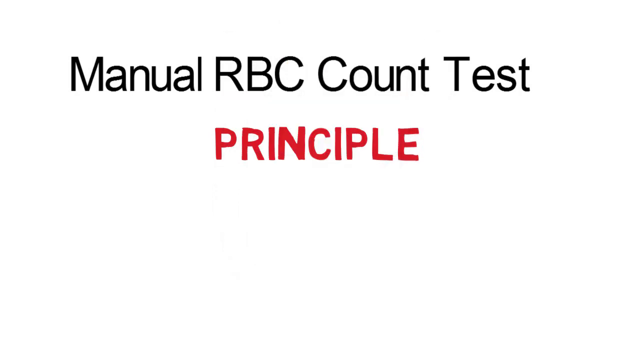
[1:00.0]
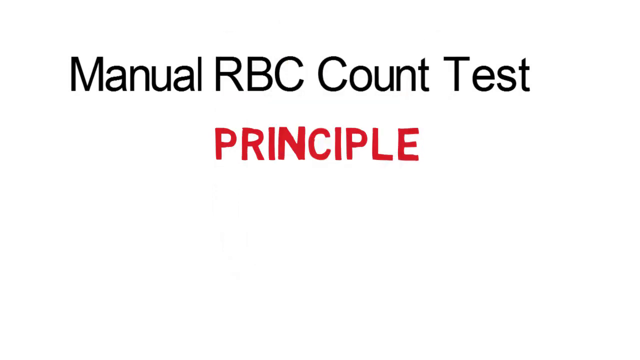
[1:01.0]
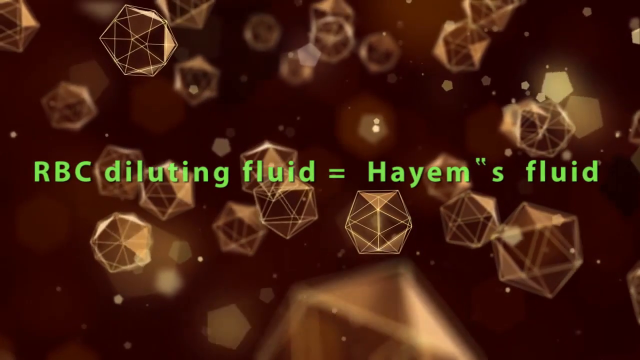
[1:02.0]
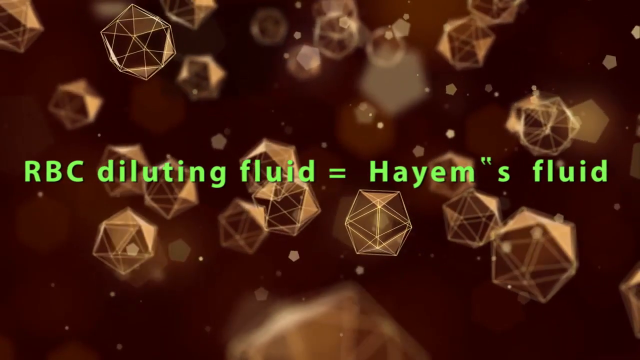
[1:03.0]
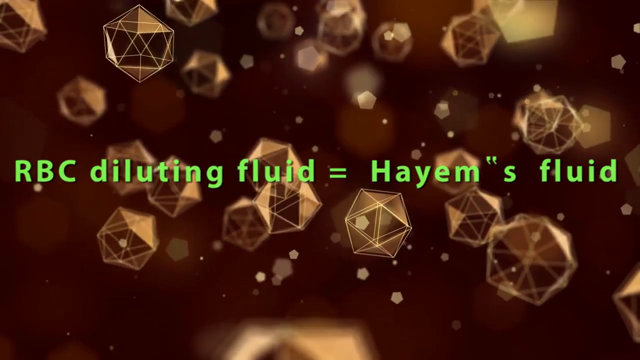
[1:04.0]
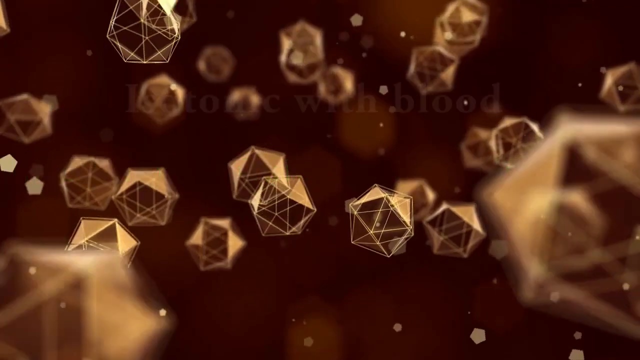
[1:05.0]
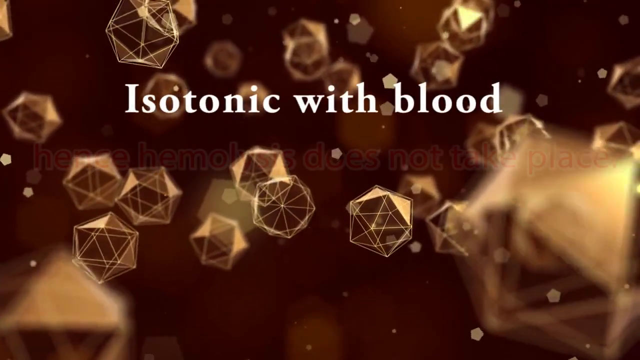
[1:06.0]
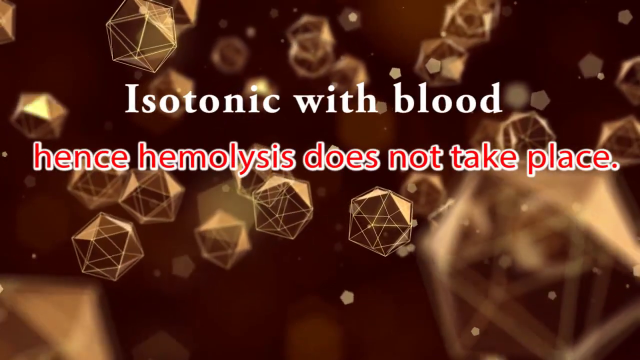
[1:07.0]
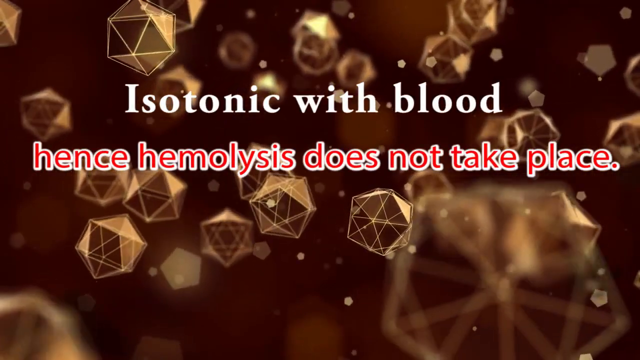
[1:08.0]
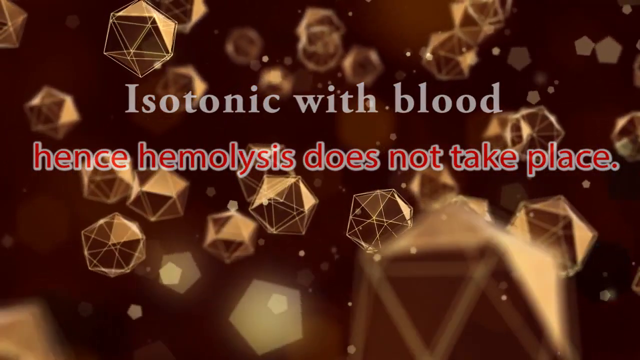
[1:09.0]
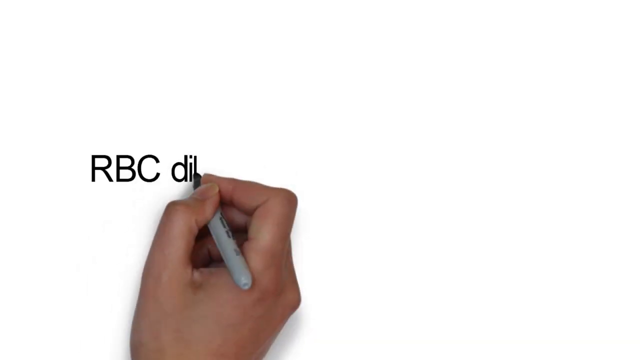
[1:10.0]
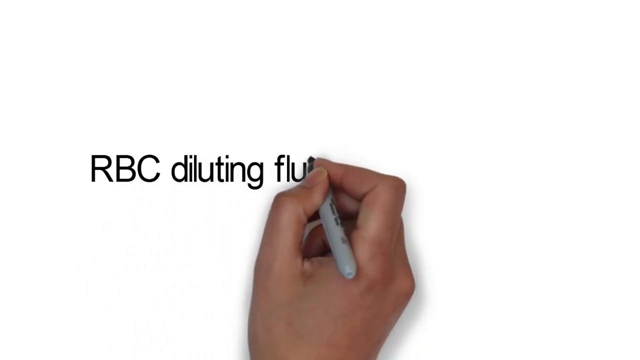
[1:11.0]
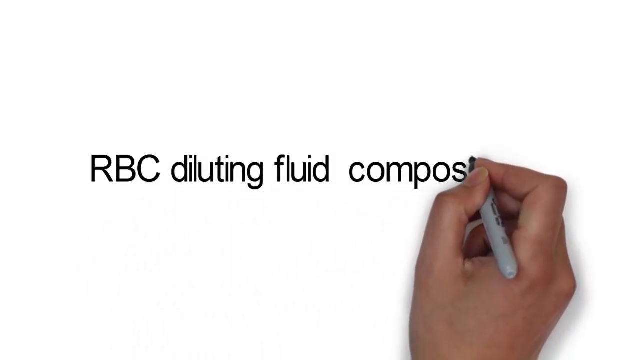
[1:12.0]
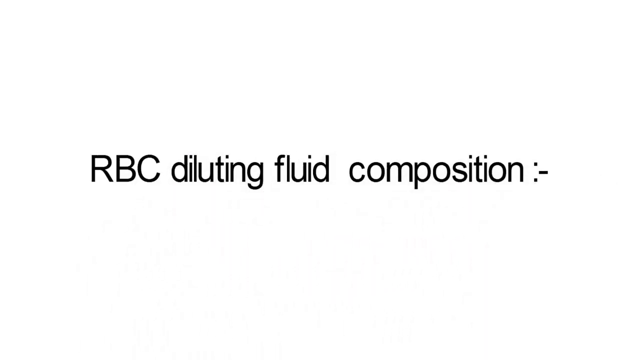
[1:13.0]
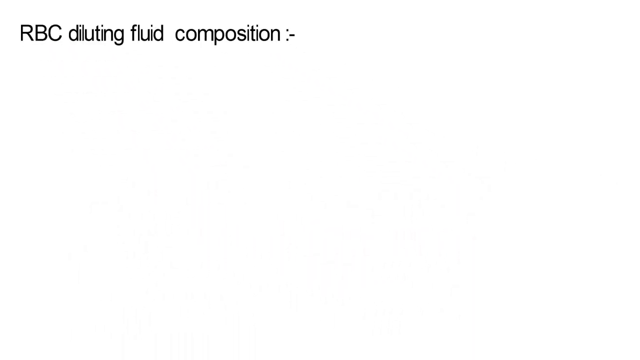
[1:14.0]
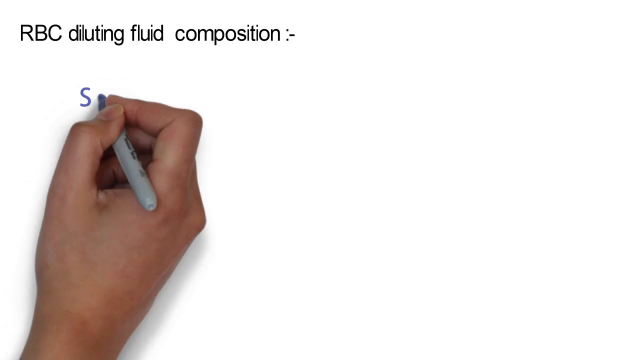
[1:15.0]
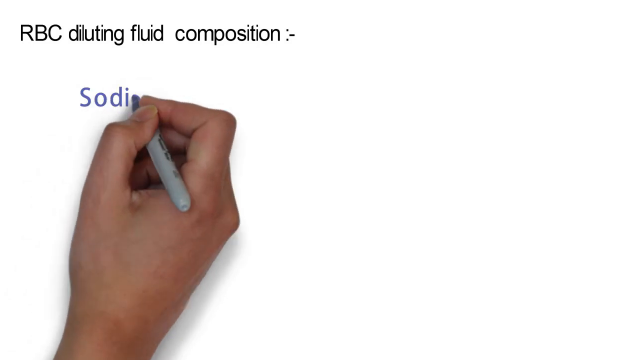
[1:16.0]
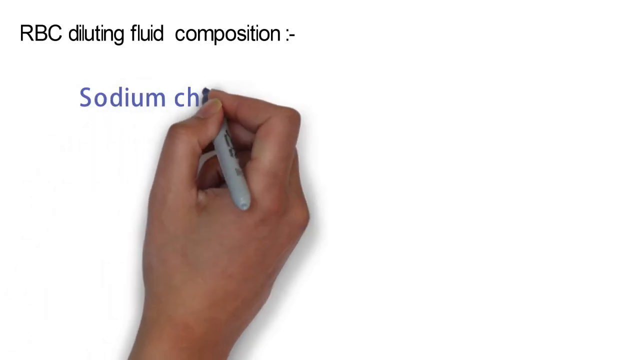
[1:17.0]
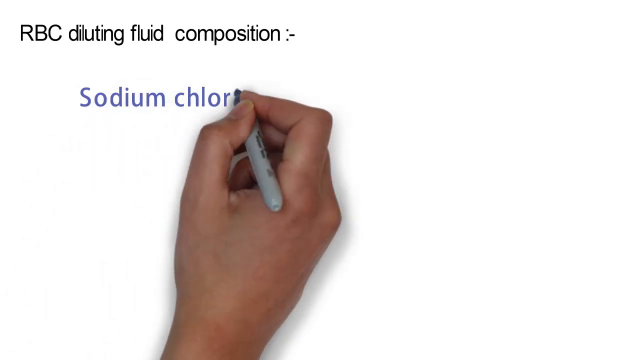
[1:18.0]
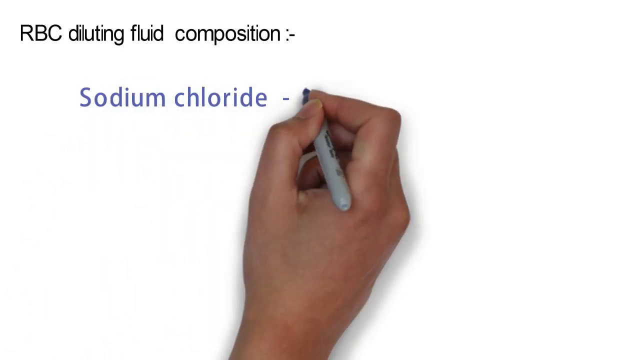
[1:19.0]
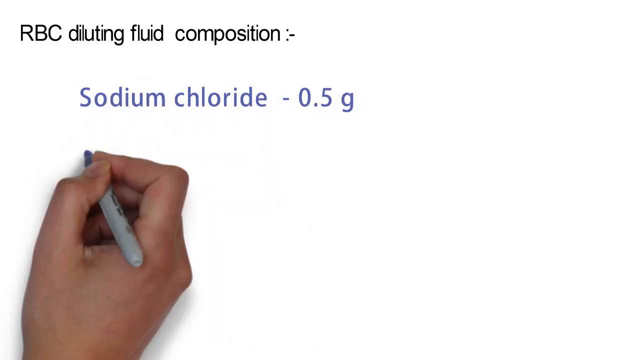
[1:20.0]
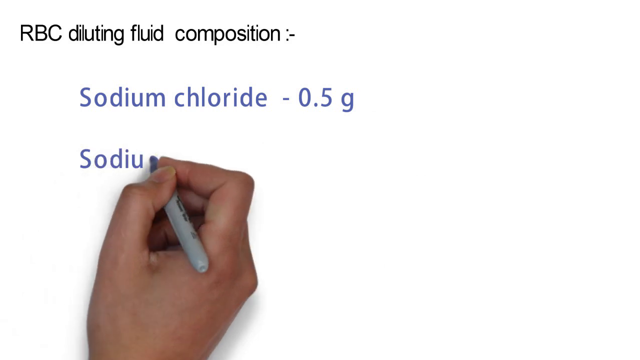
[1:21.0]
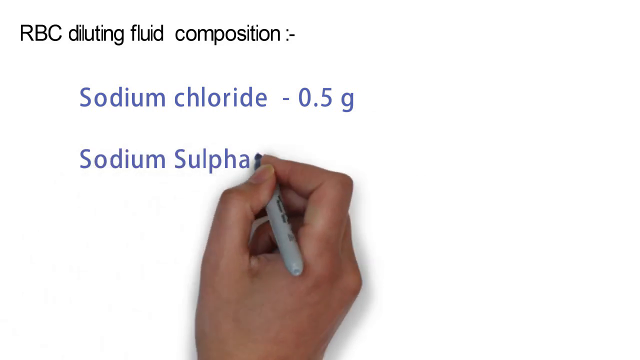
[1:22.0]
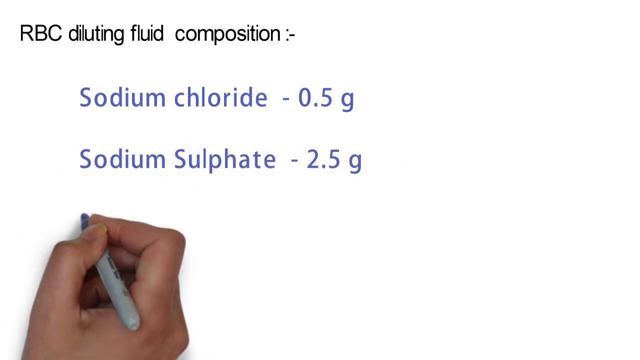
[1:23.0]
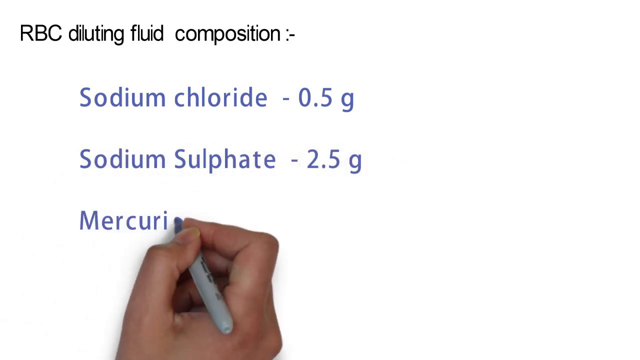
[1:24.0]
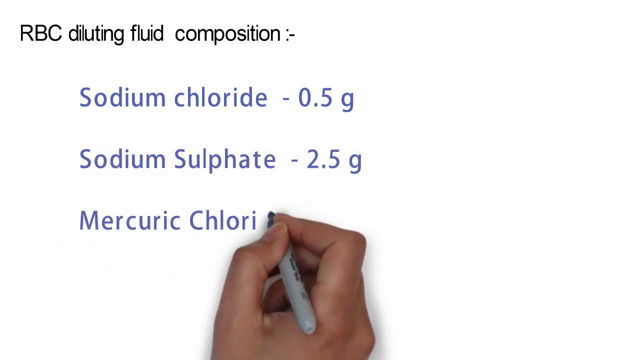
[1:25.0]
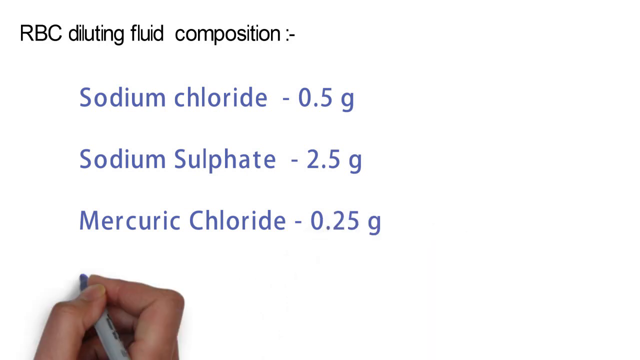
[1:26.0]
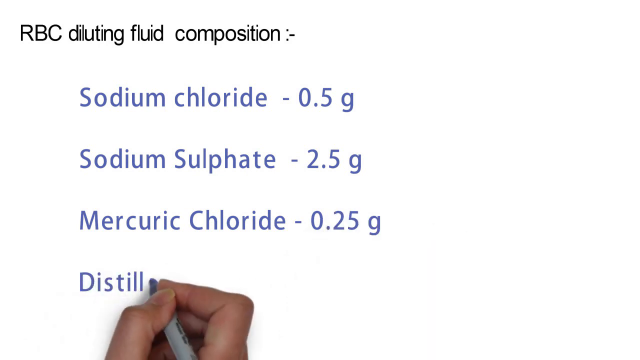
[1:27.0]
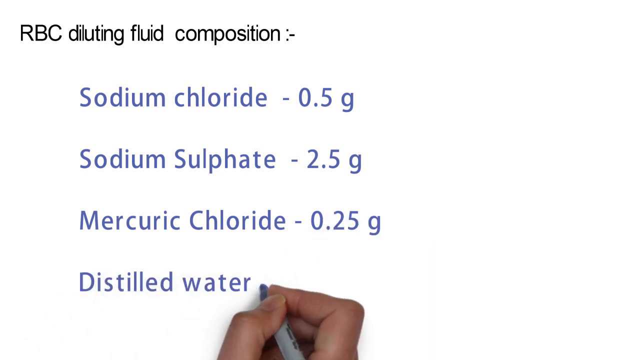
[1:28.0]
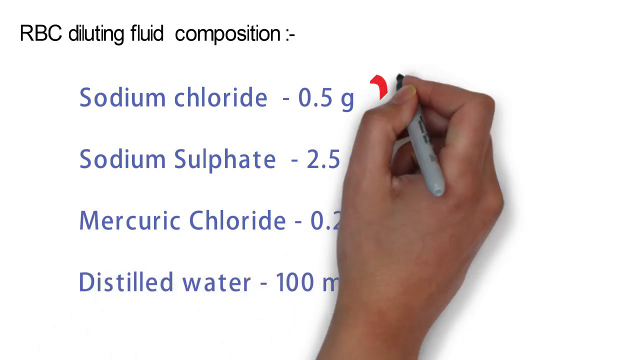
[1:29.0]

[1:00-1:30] The hand disappears, revealing the red word "principal", so the full heading reads "manual RBC count test principal". The background returns, and green text reads "RBC diluting fluid equals hyams fluid". The words change to "isotonic with blood" and then "hence hemolysis does not take place", written in red. A hand writes the words "RBC diluting fluid composition" on the screen, then writes "sodium chloride 0.5g", "sodium sulfate 2.5g", "mercury chloride 0.25g" and "distilled water 100ml", all the letters and numbers in blue.